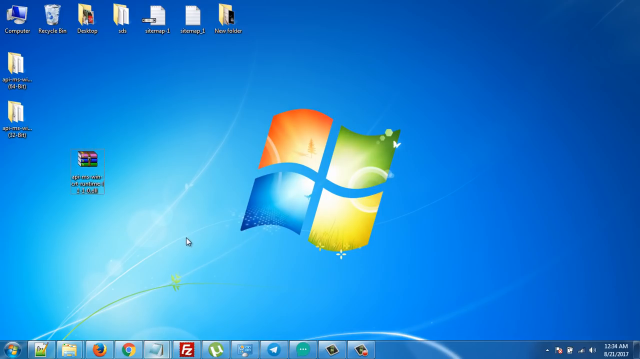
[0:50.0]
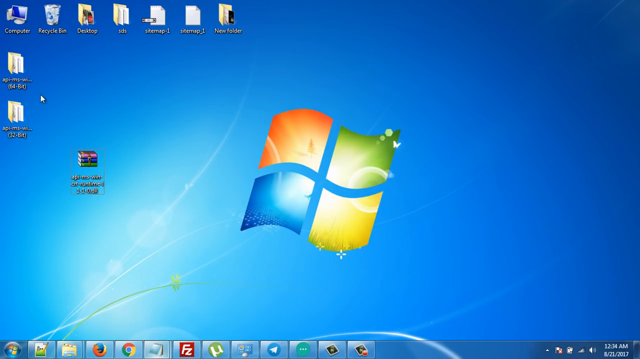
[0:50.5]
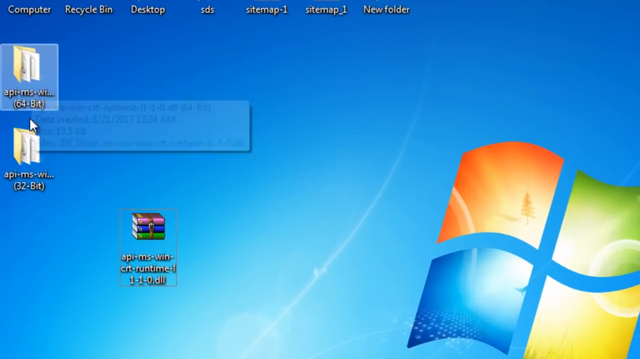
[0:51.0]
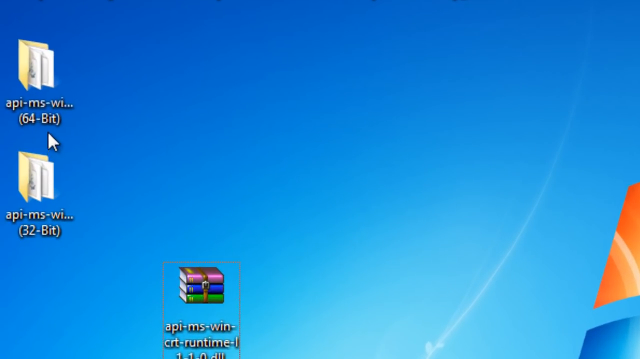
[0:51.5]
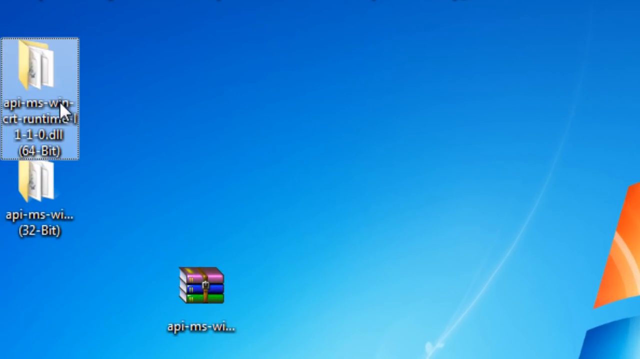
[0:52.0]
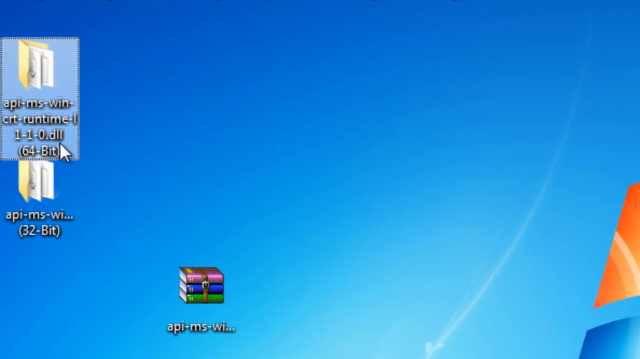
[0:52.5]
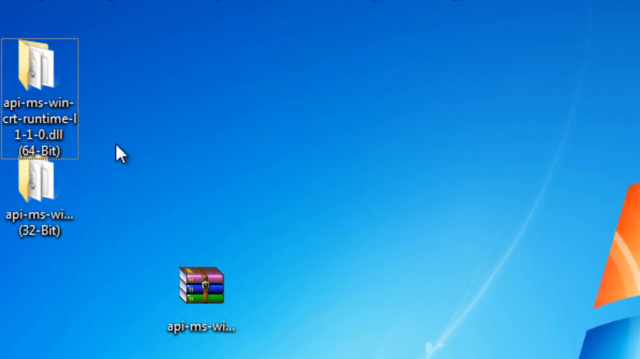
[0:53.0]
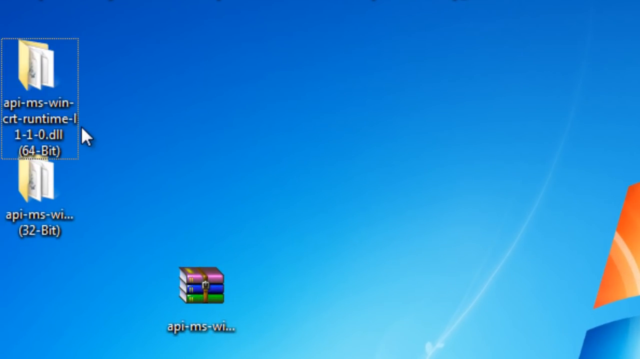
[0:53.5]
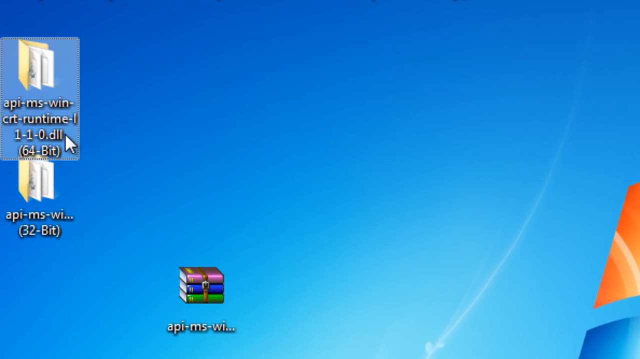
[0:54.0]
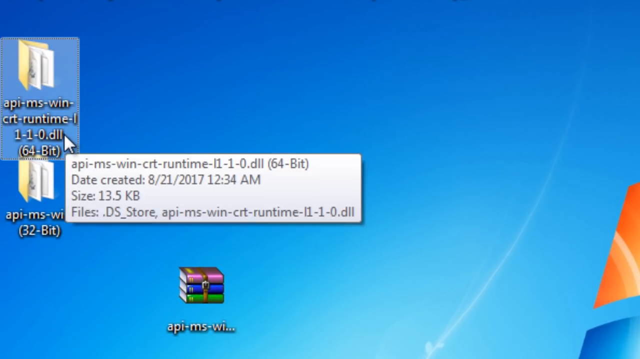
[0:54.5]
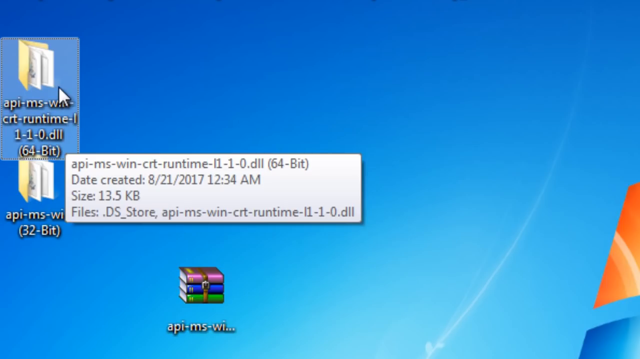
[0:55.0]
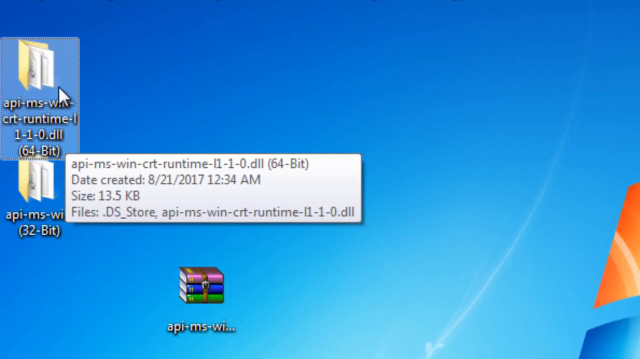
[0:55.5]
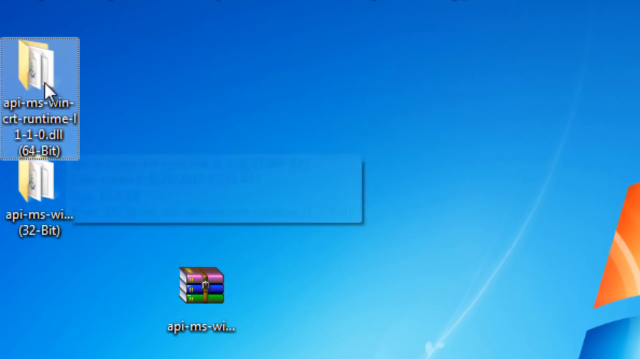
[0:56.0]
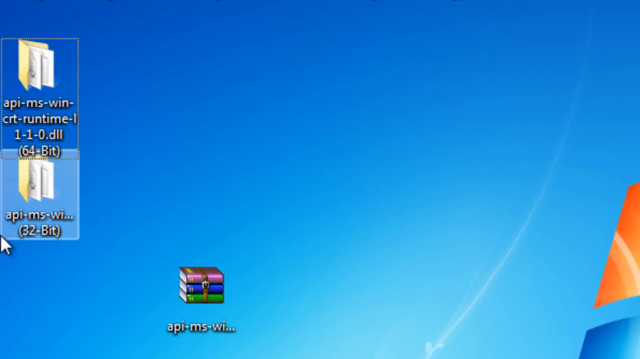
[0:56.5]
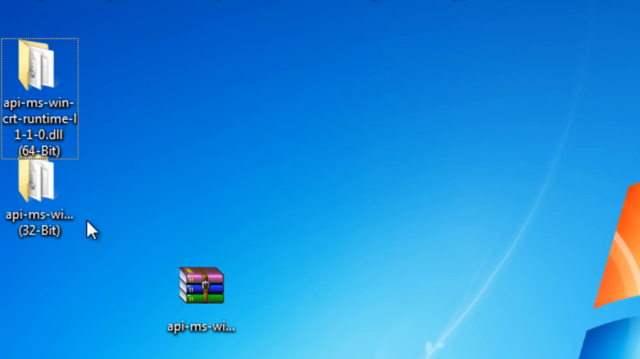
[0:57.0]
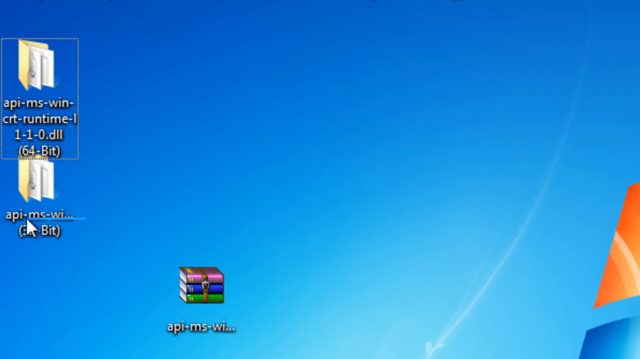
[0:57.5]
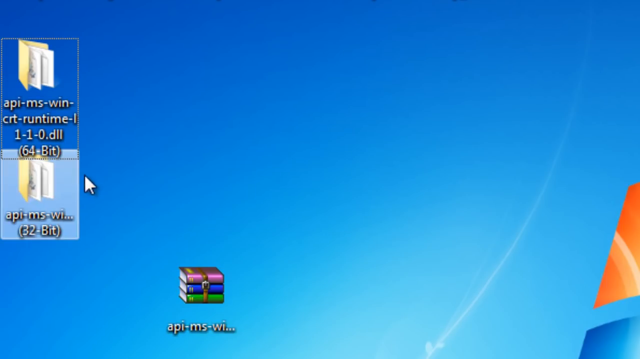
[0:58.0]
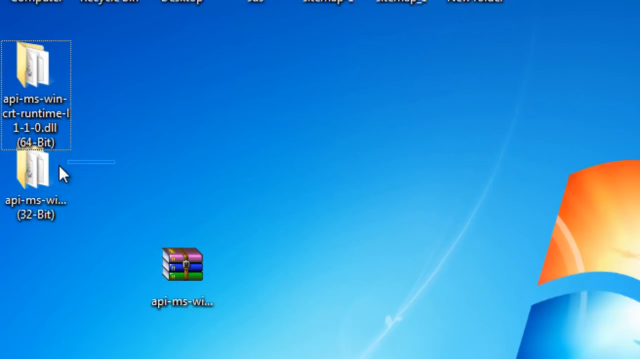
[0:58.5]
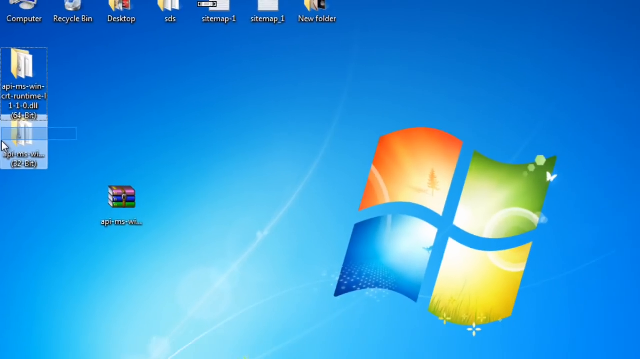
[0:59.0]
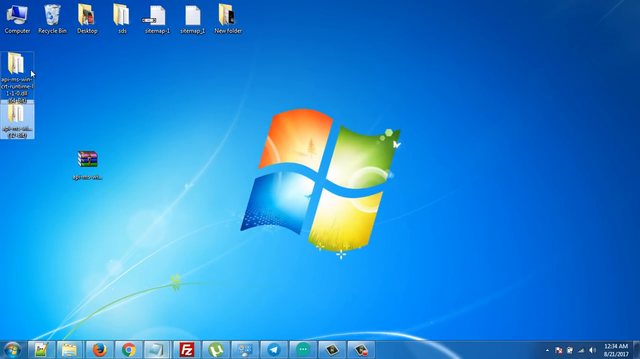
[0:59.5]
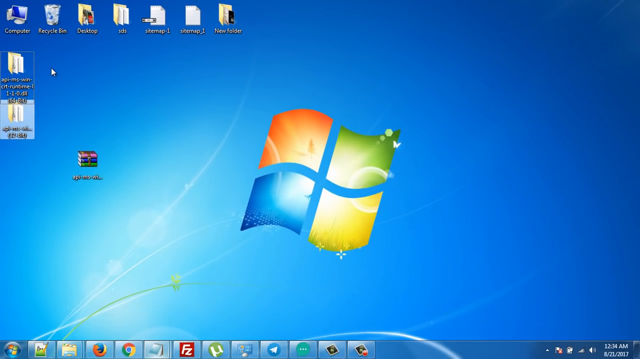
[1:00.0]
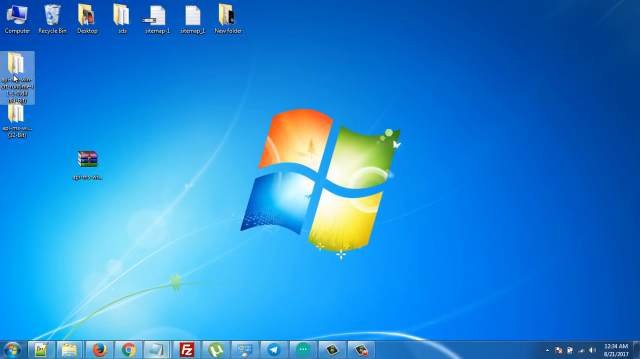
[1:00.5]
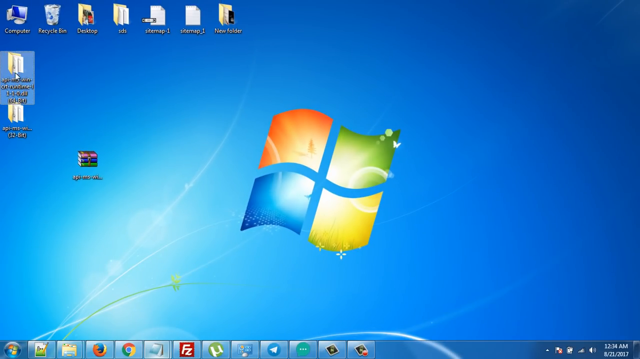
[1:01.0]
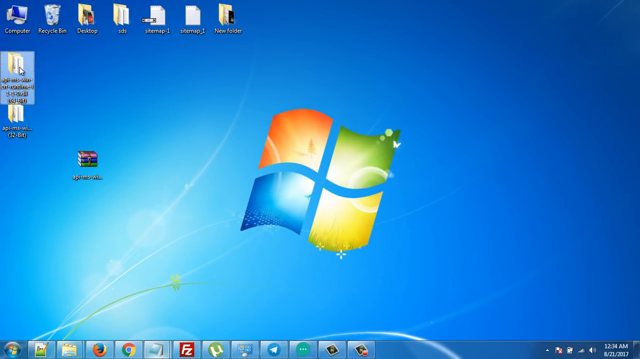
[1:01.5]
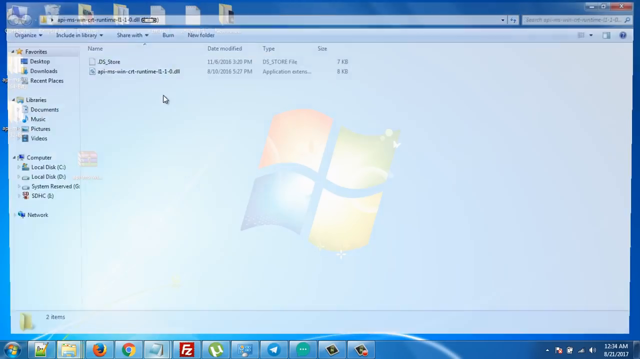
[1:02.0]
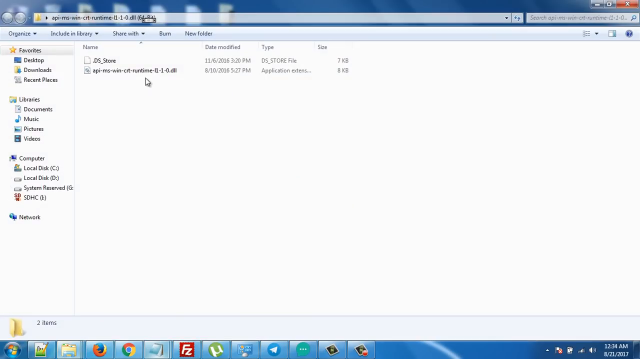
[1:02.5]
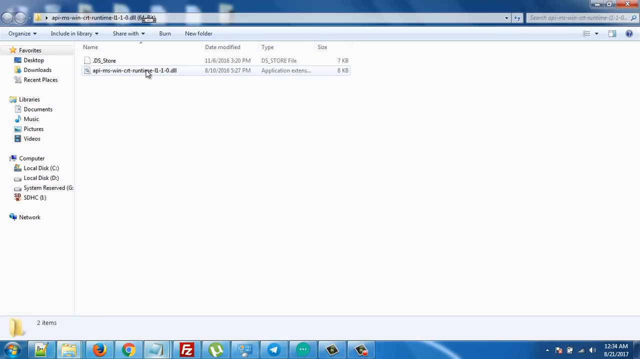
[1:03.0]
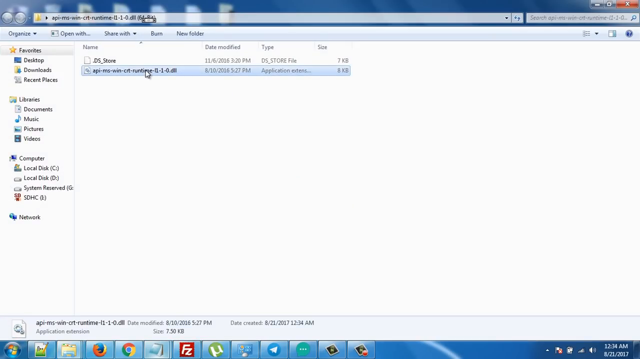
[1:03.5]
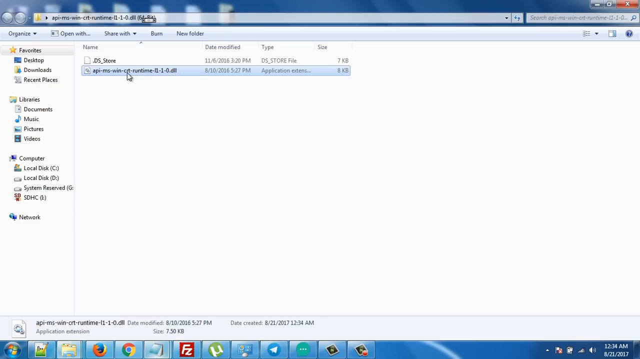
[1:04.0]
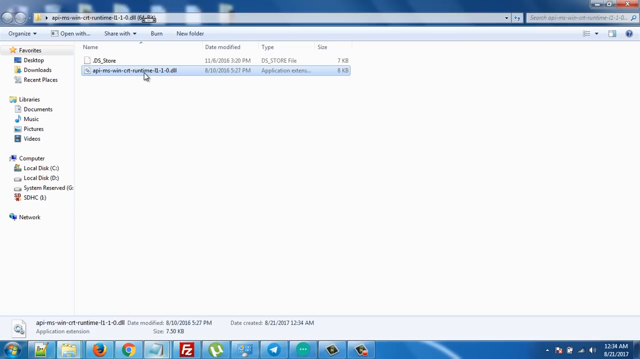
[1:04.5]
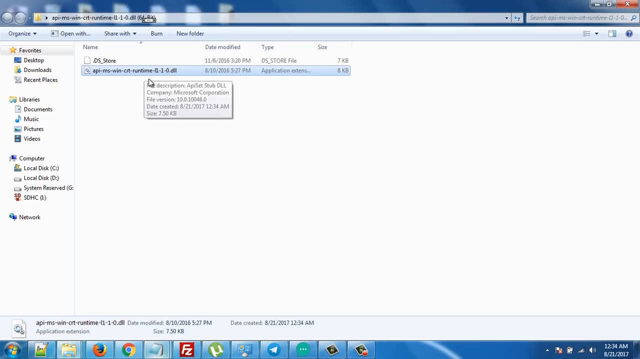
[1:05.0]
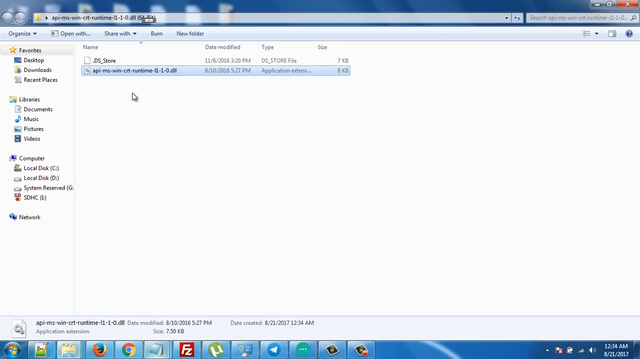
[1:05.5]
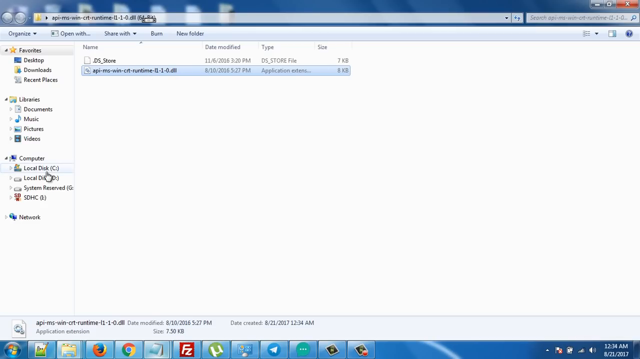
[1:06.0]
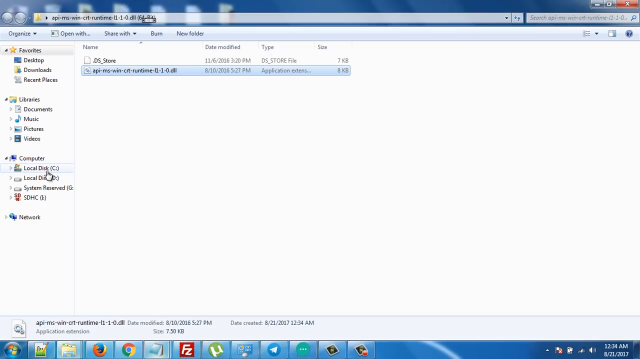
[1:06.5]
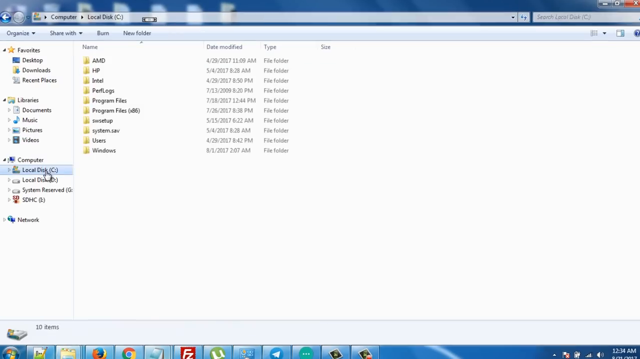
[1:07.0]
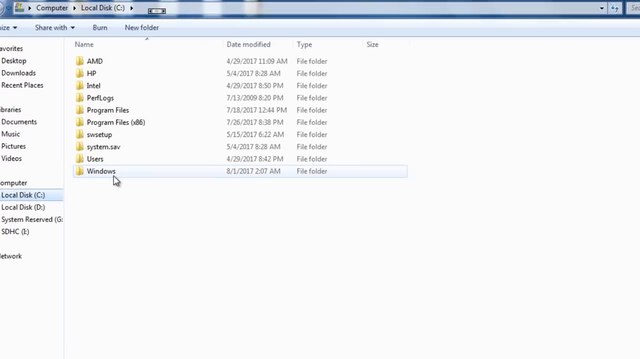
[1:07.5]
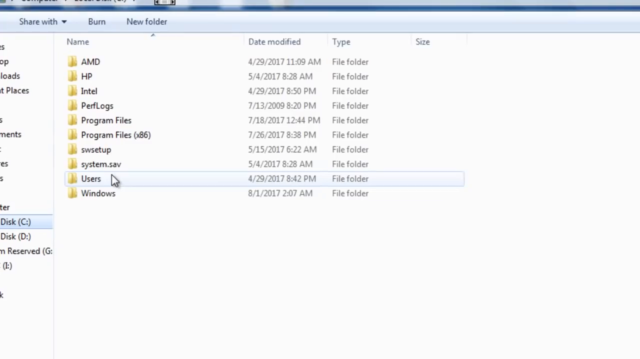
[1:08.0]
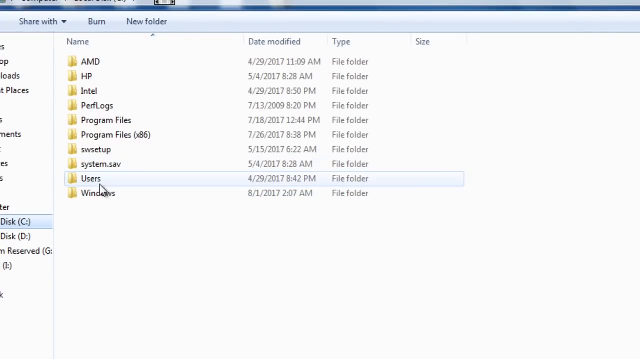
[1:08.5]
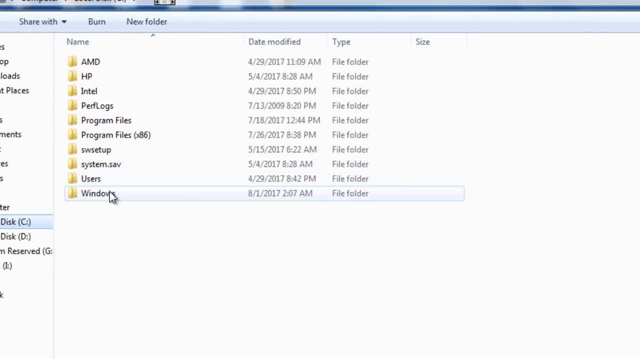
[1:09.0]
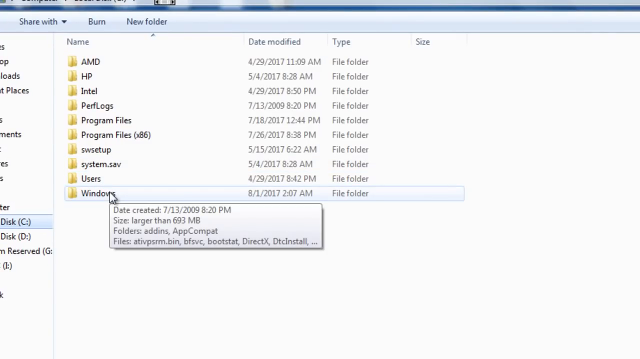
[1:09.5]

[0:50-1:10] The Windows screen is shown with the file open. The view zooms into a file labeled "api-ms-wan-crt-runtime-11-1-0.d11" followed by "(64 bits)" in parentheses. It is a folder, and the person double-clicks on it and goes into Windows. The person goes back to the white screen backdrop and clicks on Windows, which leads back to the main screen.